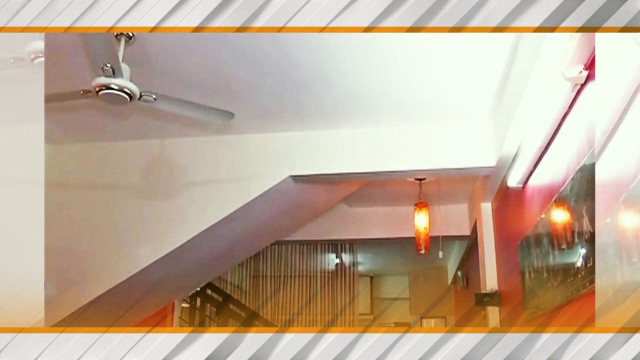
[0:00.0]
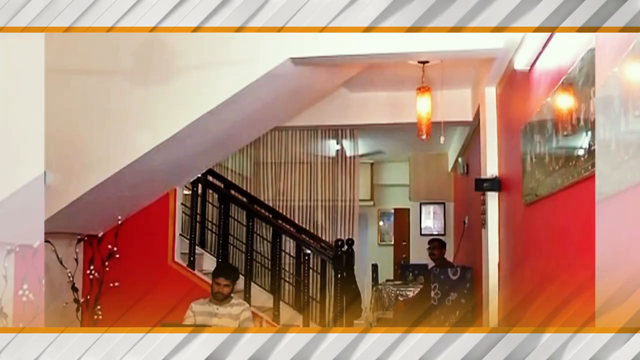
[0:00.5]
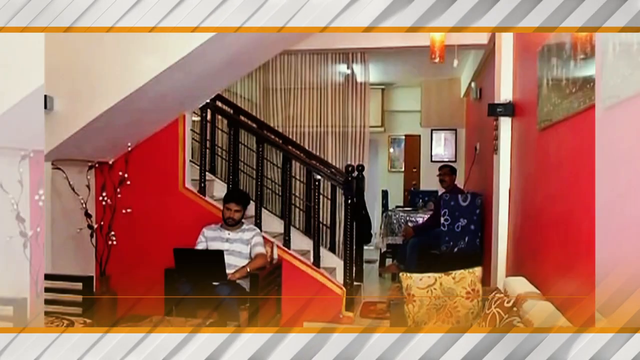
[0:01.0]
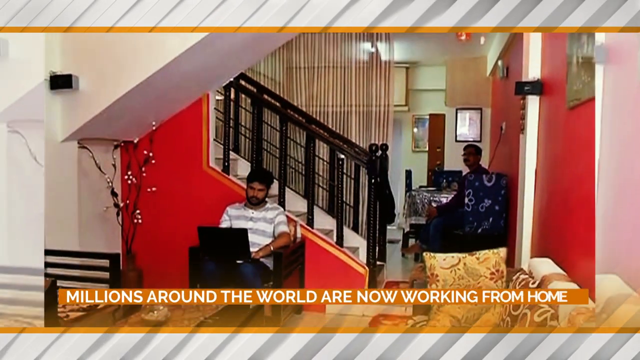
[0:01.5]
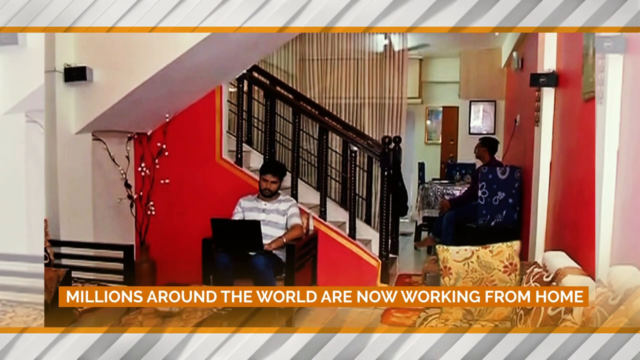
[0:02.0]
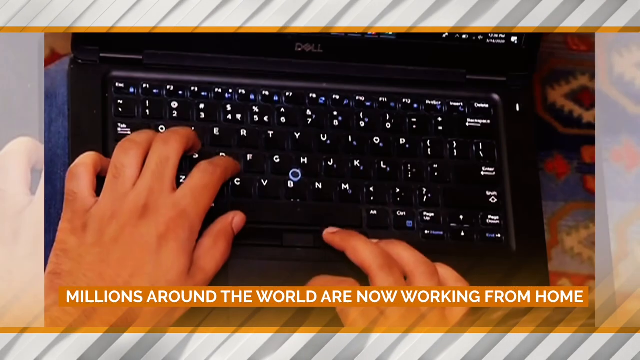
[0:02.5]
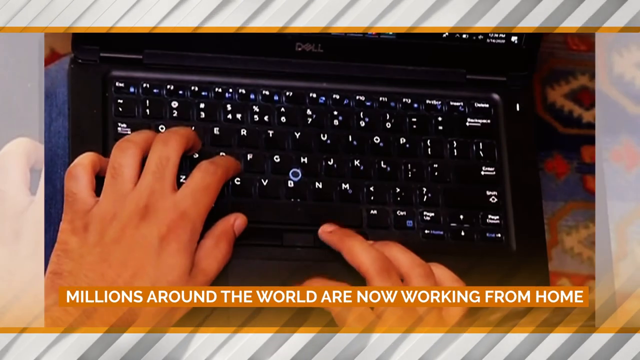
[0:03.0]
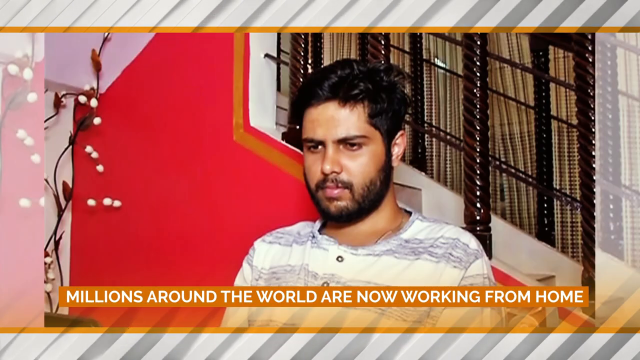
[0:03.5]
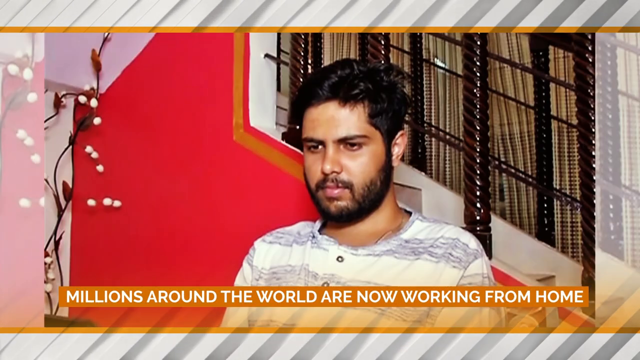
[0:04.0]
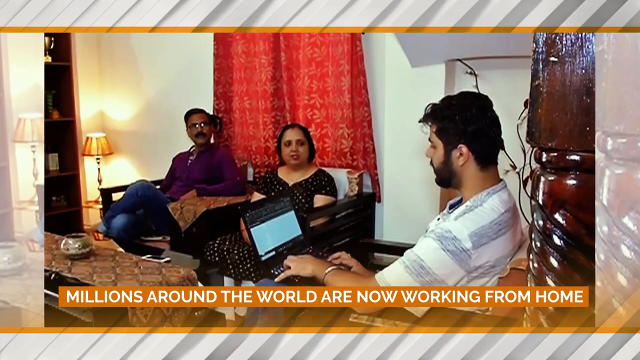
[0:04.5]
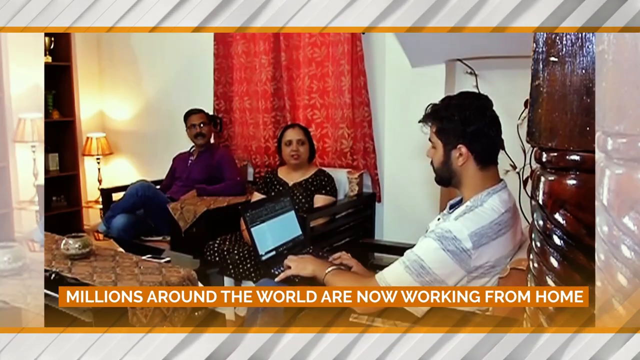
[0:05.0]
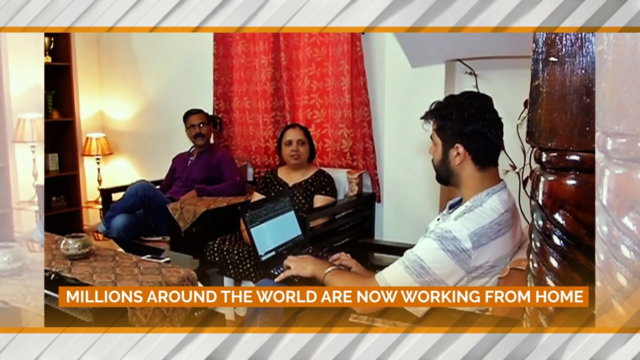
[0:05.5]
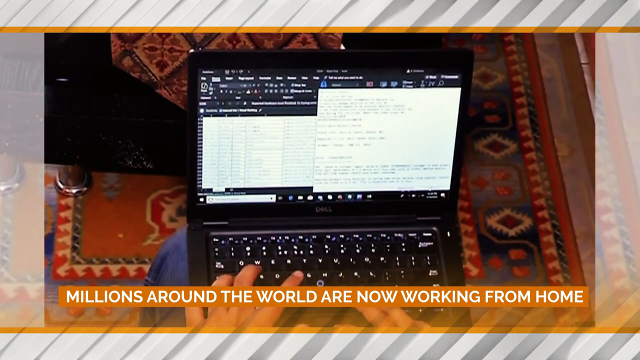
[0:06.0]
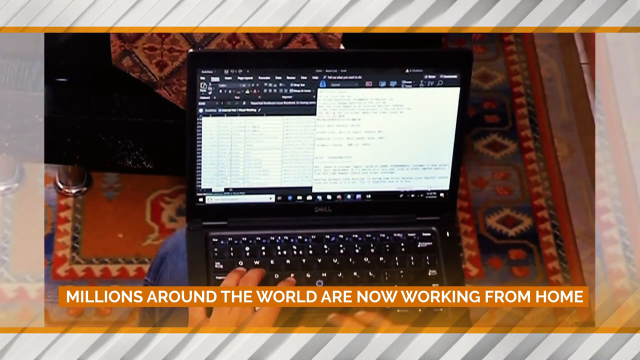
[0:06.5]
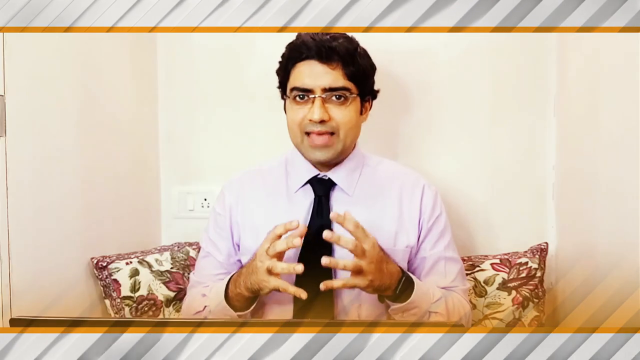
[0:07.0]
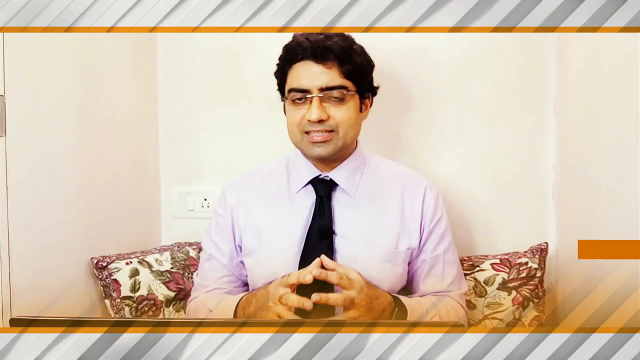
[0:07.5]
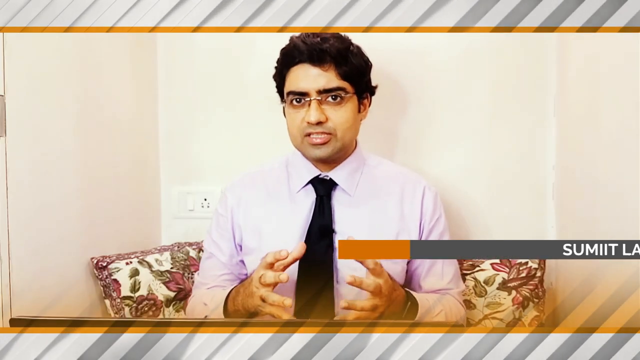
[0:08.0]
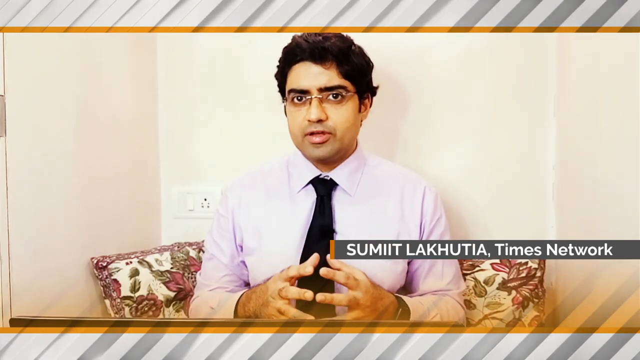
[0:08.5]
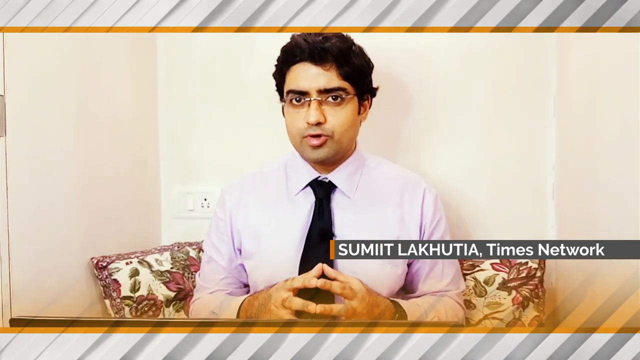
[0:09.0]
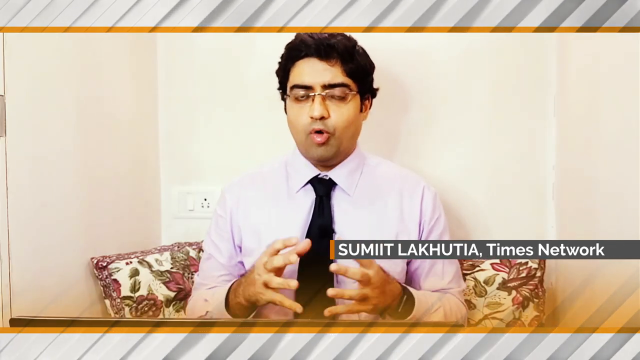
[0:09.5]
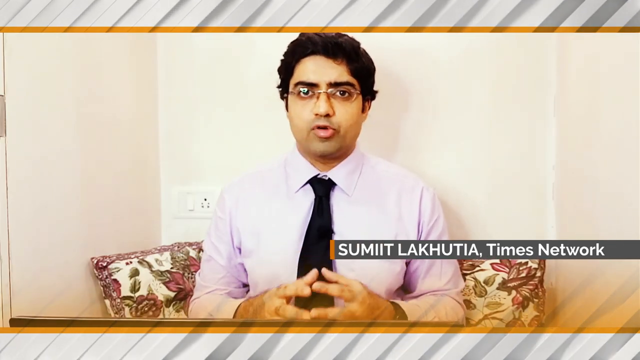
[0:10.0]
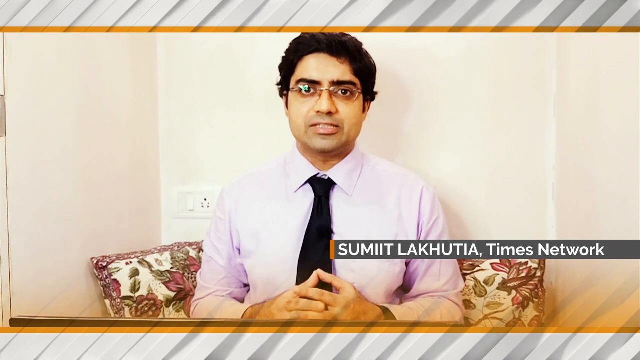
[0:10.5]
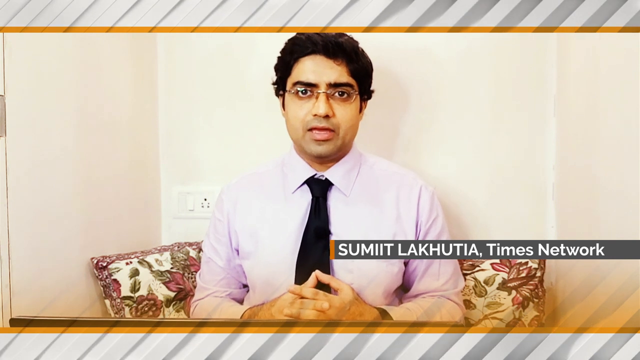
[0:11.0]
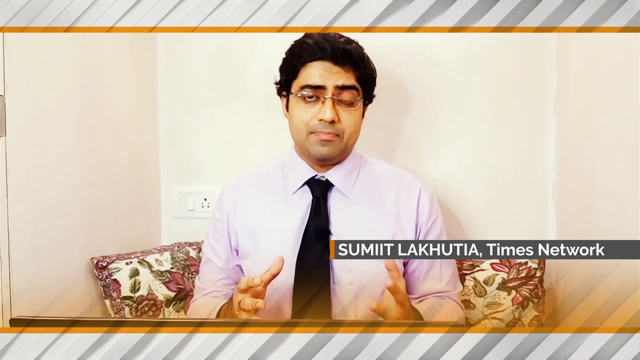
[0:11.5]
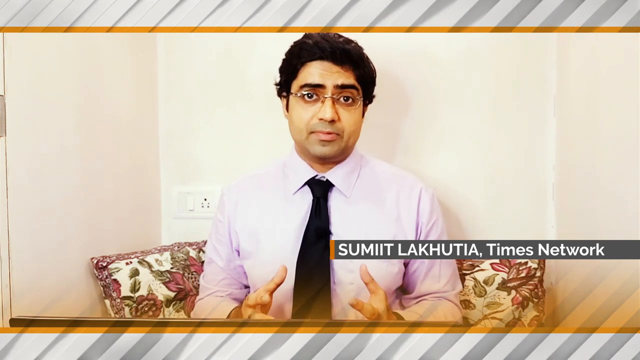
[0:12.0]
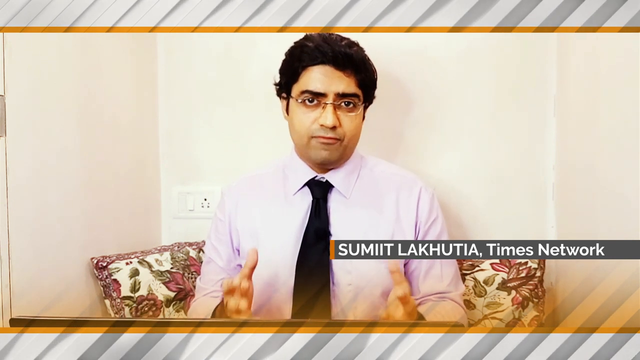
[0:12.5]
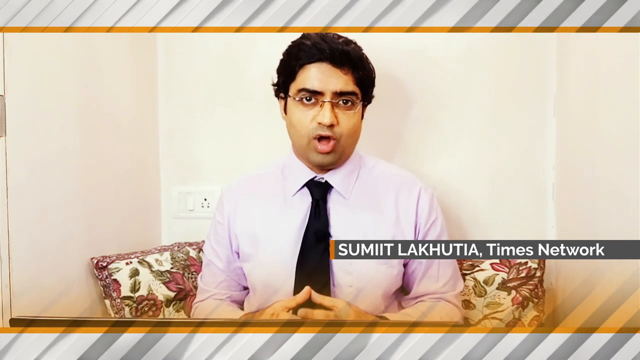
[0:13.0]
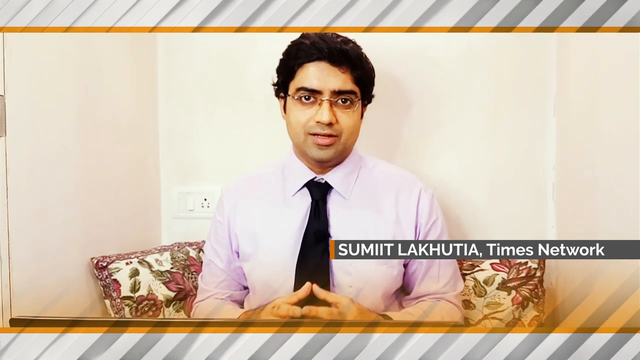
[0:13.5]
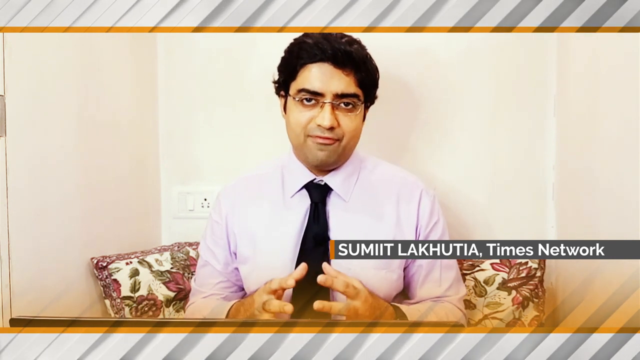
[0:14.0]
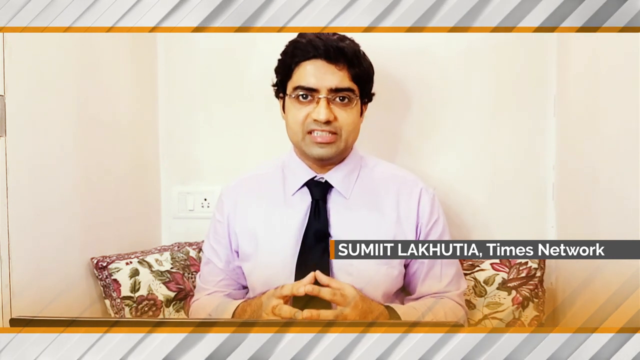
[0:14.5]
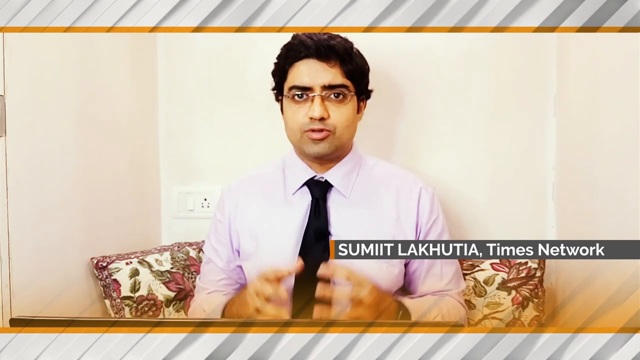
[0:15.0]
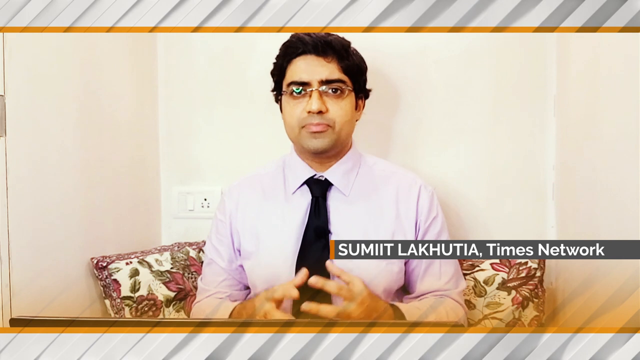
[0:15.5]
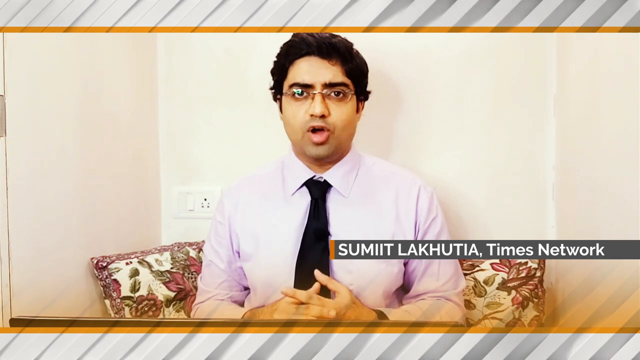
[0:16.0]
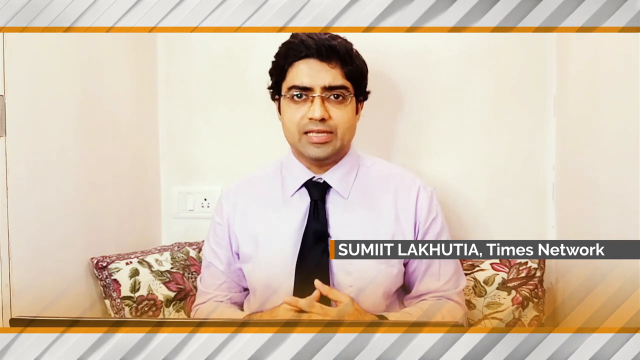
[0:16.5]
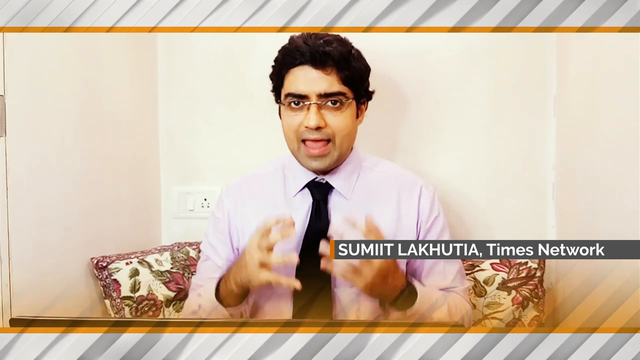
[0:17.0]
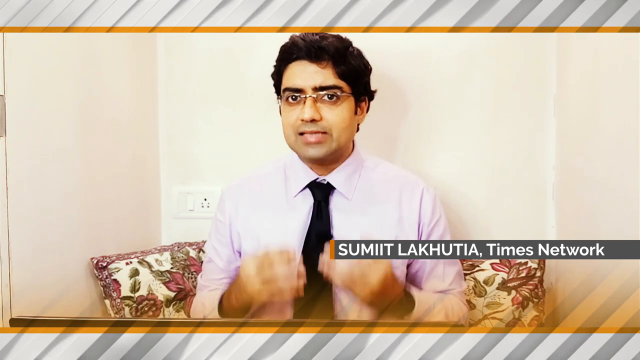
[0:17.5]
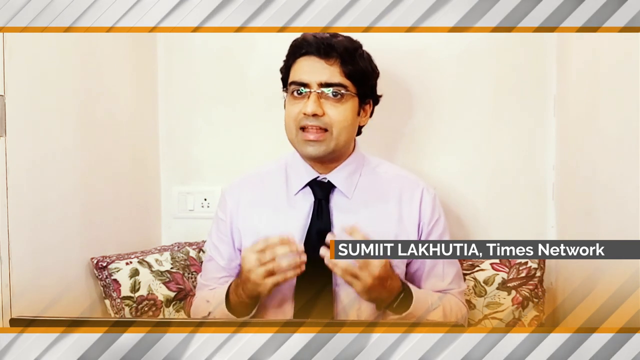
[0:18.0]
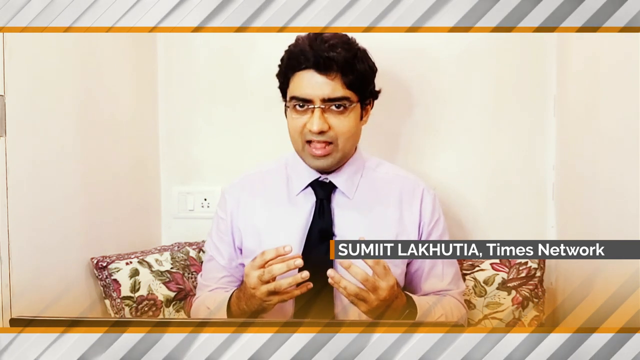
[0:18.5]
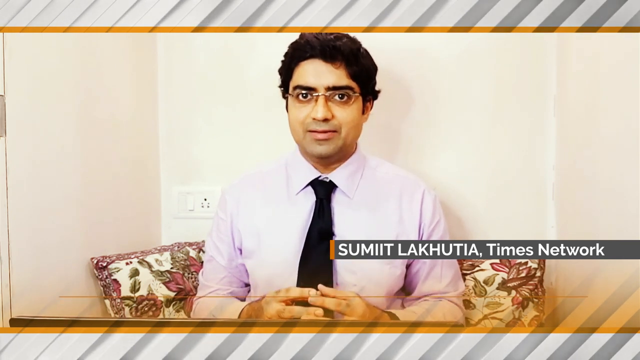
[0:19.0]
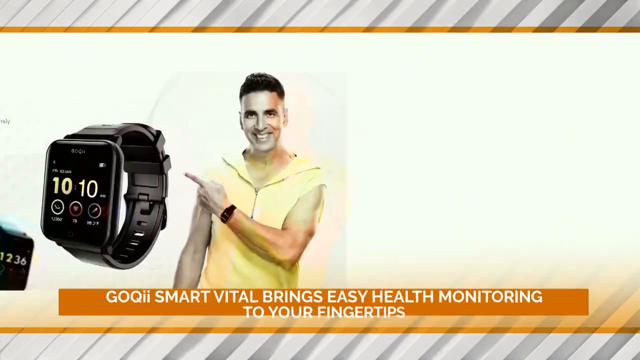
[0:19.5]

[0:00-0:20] On-screen text reads "millions around the world are now working from home." The video is set in India. A man on a keyboard appears, then a close-up of him, then the same man with his parents; he is emailing, and his parents may be interrupting him. A man then talks to the camera, and text identifies him as Sumit Lakhotia from the Times Network. He sits on a flat floral couch and wears glasses, a black tie and a sort of light purple dress shirt, and he uses his hands a lot as he talks. A ceiling fan (a punka) is up above. Some other text appears briefly but is cut off.